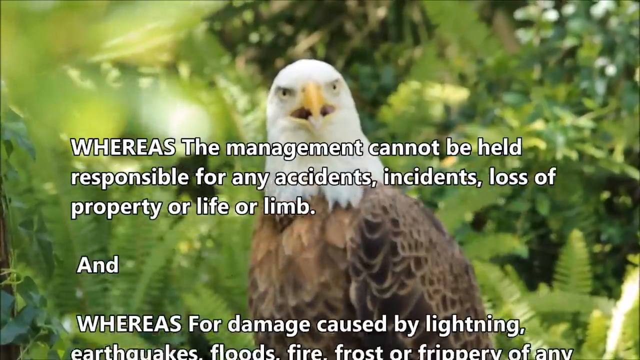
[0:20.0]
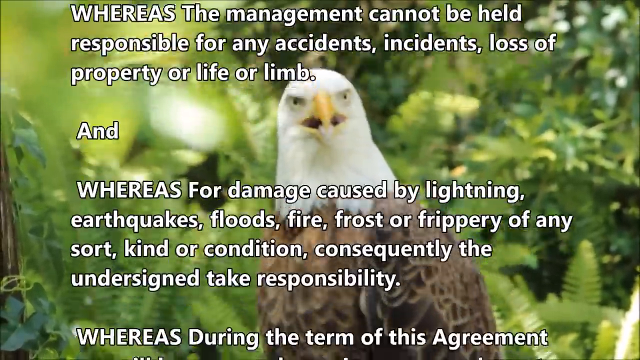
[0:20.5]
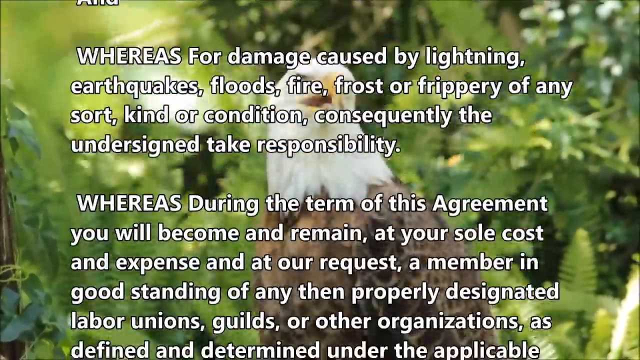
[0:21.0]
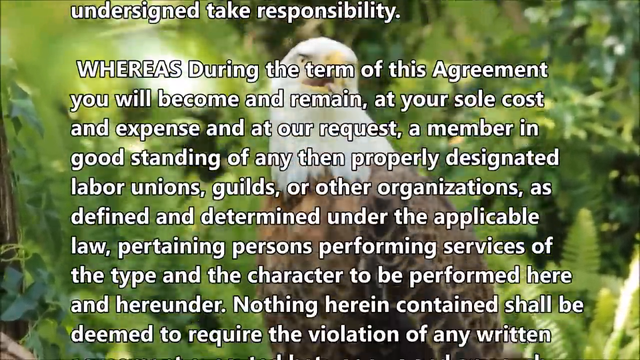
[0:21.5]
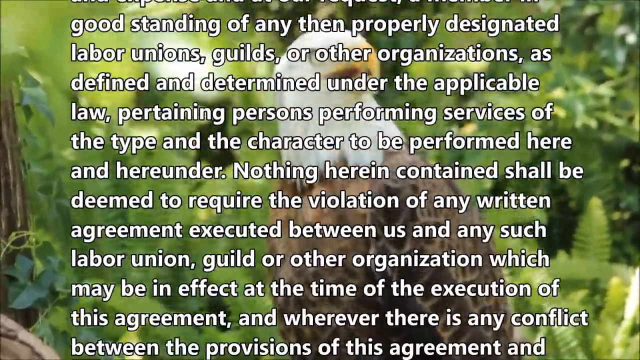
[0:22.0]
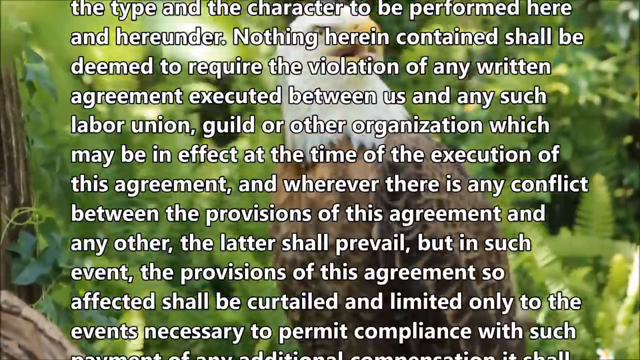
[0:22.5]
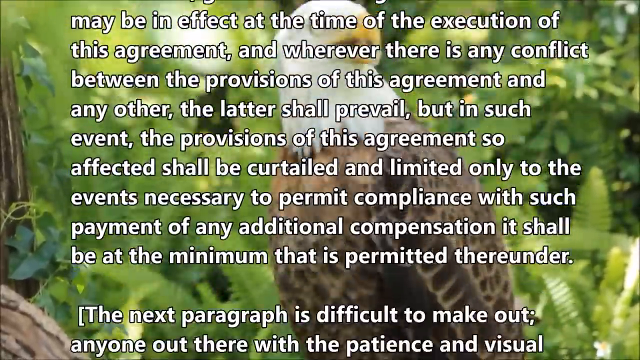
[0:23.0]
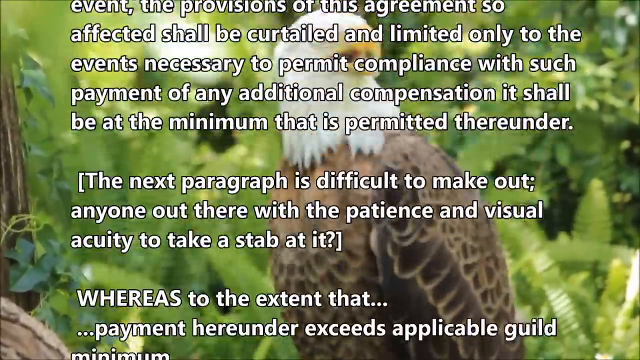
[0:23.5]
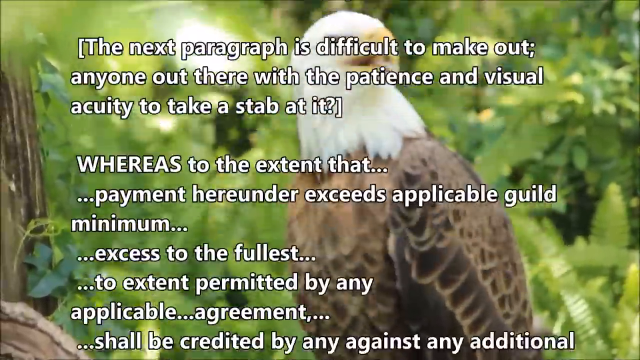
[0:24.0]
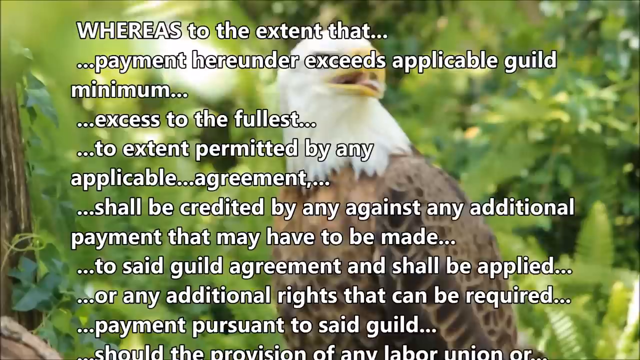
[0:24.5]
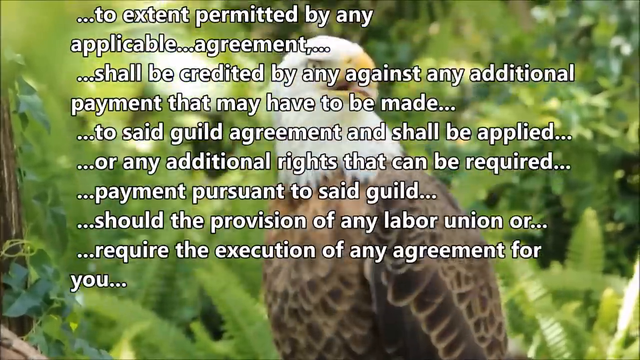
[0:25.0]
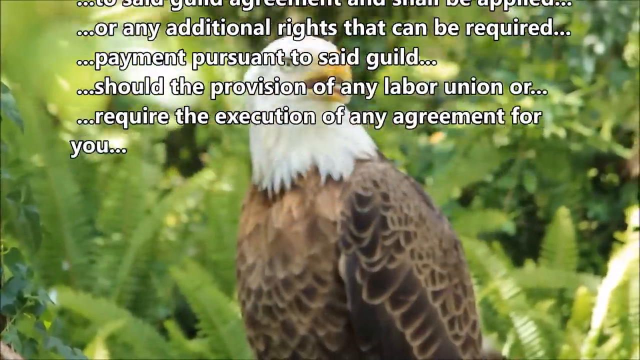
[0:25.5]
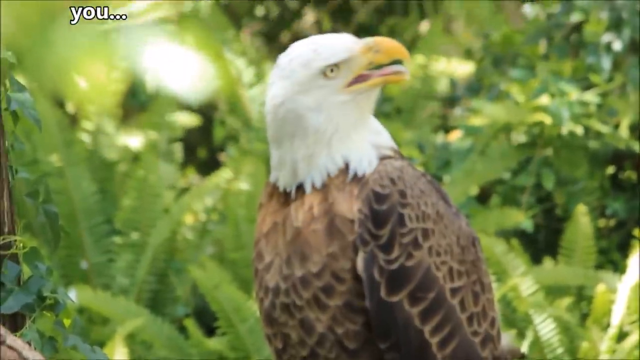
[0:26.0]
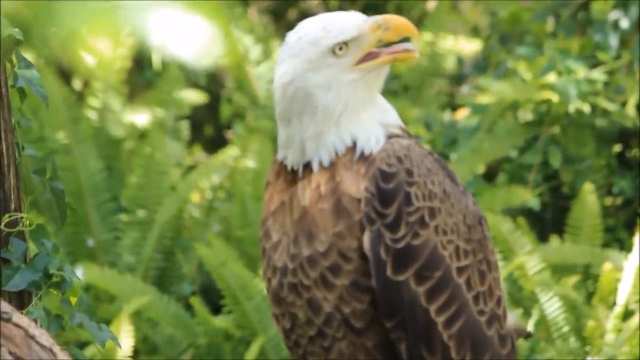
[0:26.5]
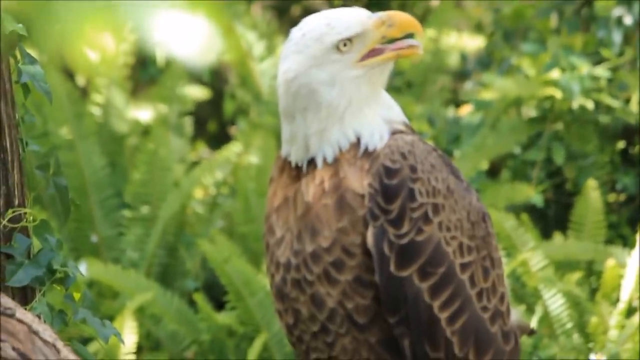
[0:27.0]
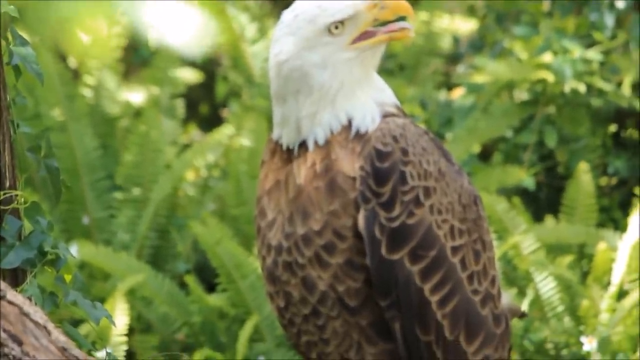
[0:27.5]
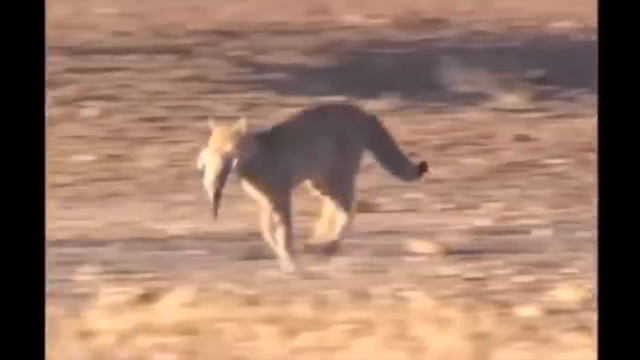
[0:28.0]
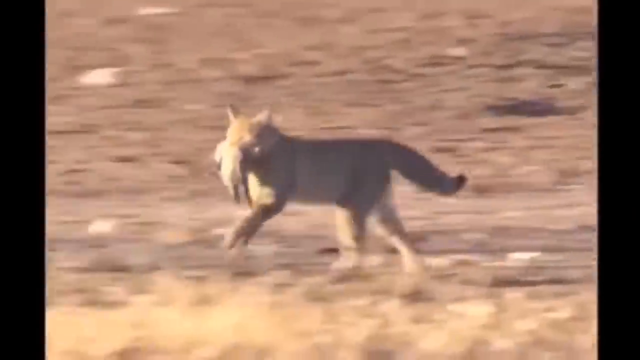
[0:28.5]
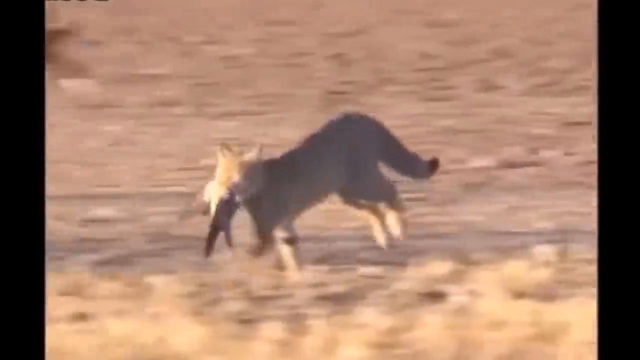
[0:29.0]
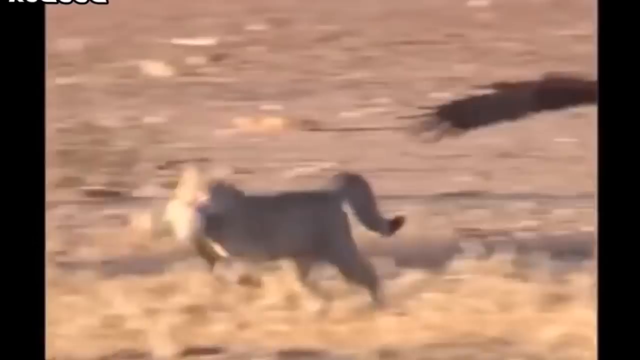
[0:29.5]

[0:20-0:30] The bald eagle, with a yellow head and brown feathers, looks straight ahead. Words then appear on screen: "Whereas the management cannot be held responsible for any accidents, incidents, loss of property or life or limb and whereas for damage caused by lightning, earthquakes, floods, fire, frost or frippery and any sort of time or condition, consequently the undersigned take responsibility. Whereas during the term of this agreement, you will become and remain at your sole cost and expense and at our request, a member in good standing of any then properly designated labor unions, guilds or other organizations as defined and determined under the applicable law pertaining persons performing services of the type and the character to be performed here and here under. Nothing herein contained shall be deemed to require the violation of any written agreement executed between us and any such labor union, guild or other organization, which may be in effect at the time of the execution of this agreement and wherever there is any conflict between the provisions of this agreement and any other, the latter shall prevail." The text continues with further paragraphs about payments, guild minimums and labor union agreements.